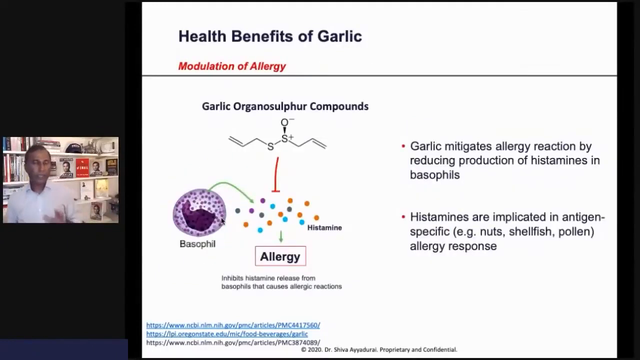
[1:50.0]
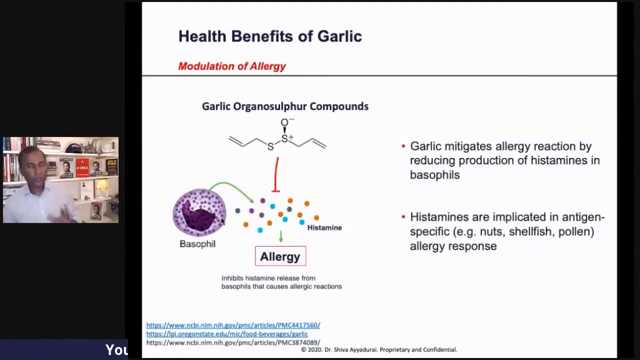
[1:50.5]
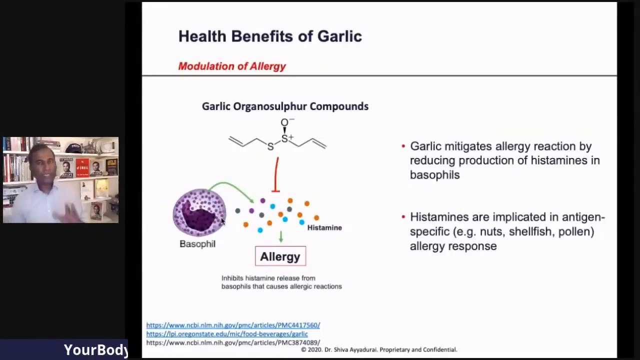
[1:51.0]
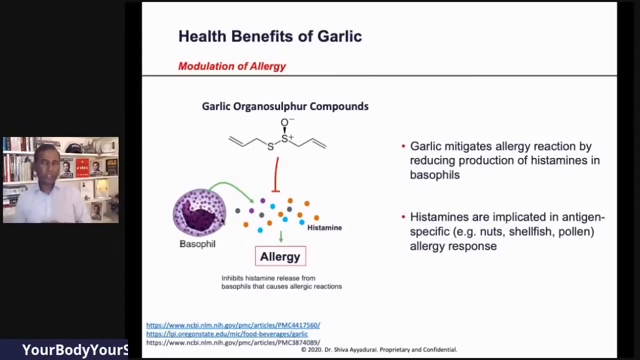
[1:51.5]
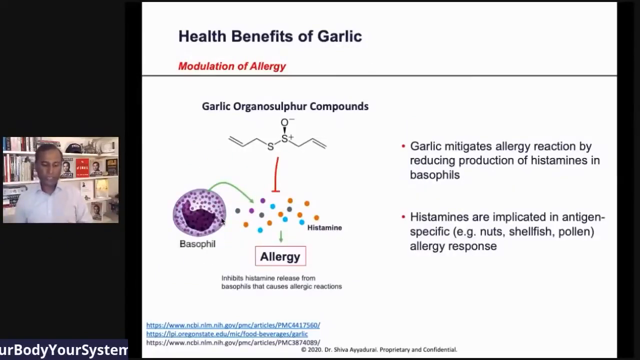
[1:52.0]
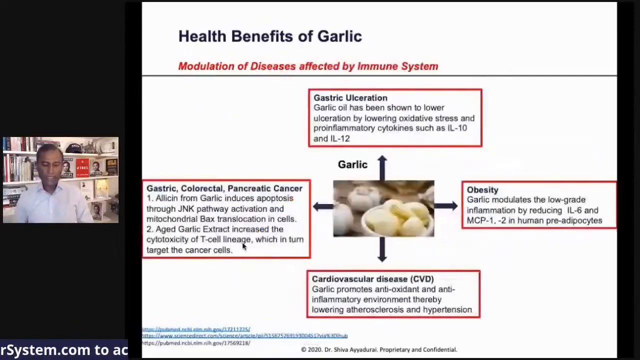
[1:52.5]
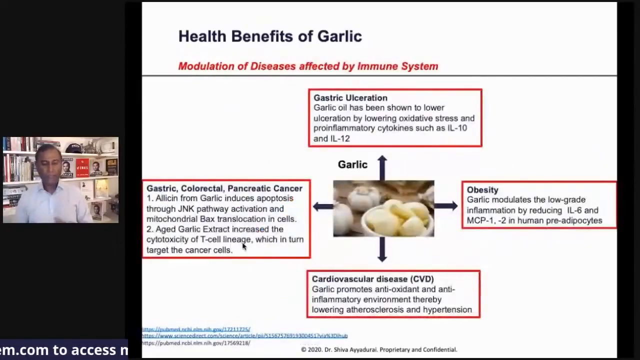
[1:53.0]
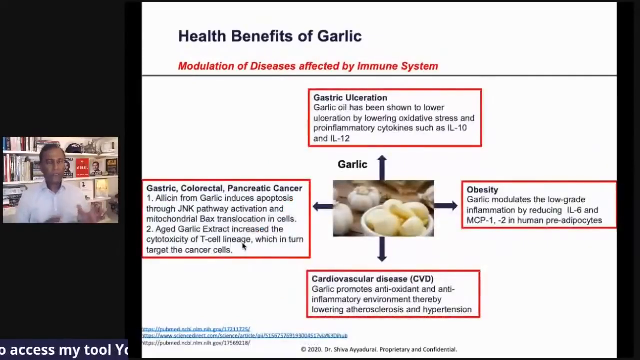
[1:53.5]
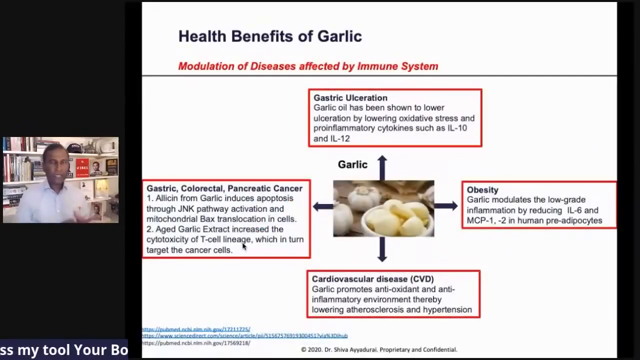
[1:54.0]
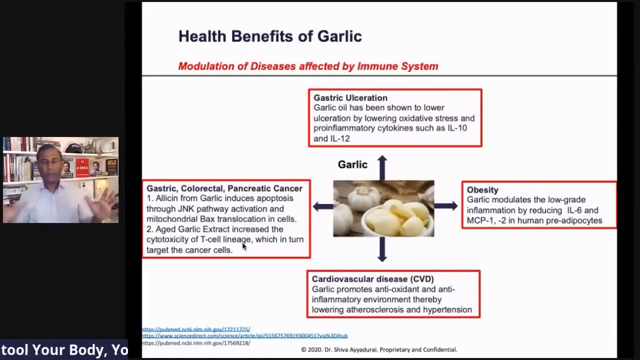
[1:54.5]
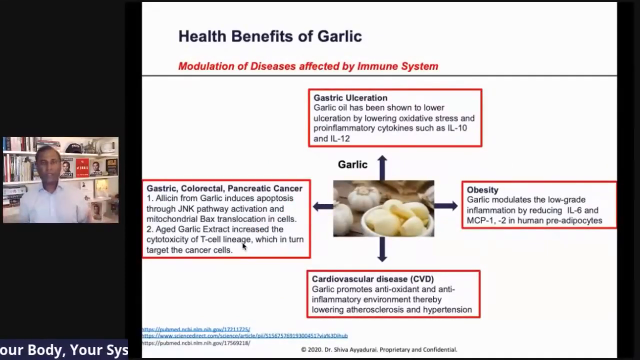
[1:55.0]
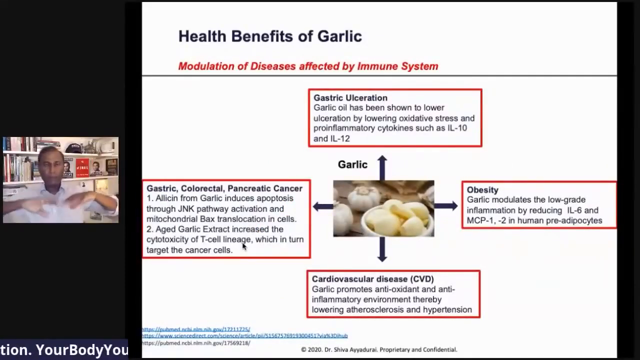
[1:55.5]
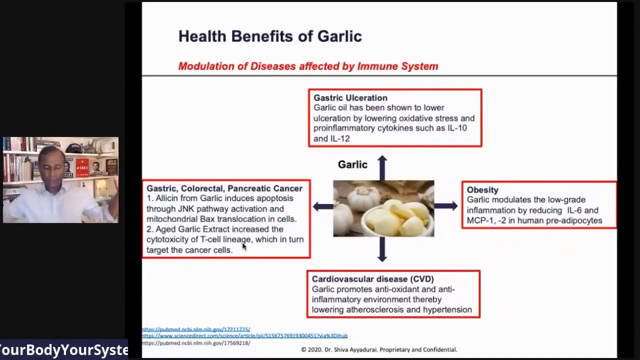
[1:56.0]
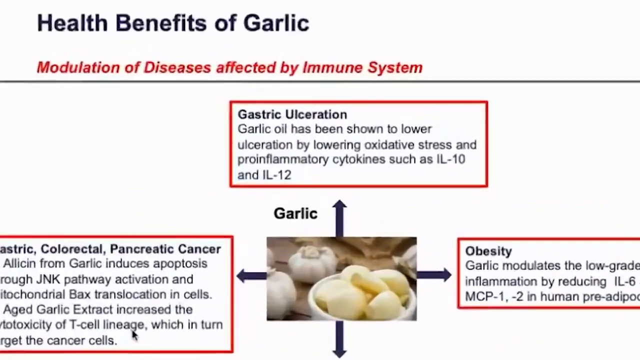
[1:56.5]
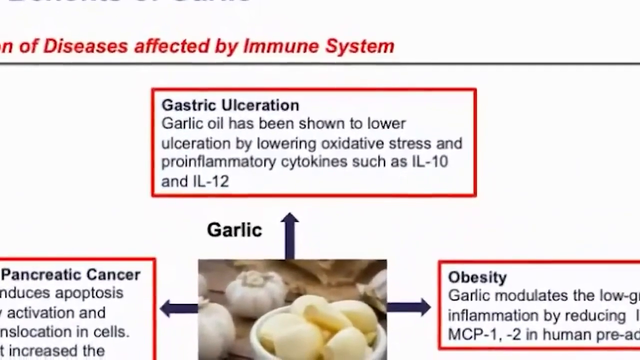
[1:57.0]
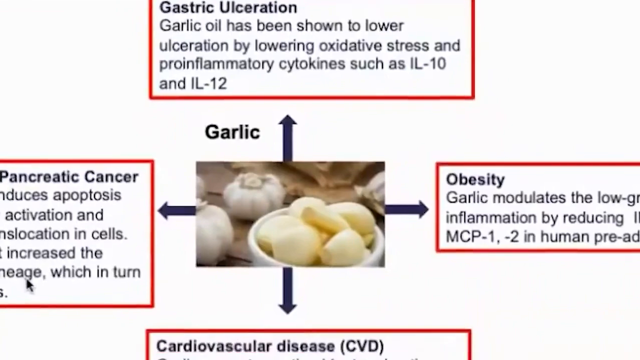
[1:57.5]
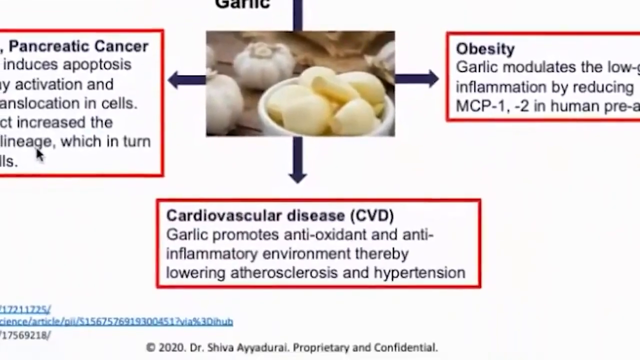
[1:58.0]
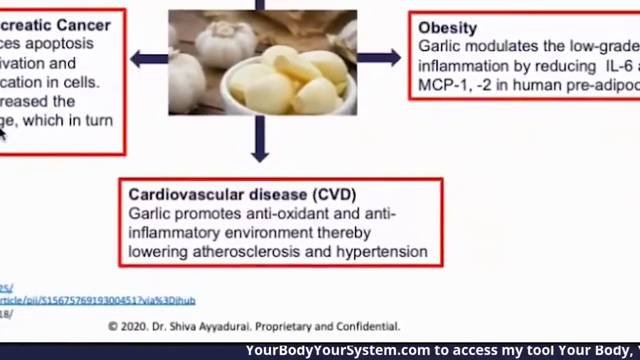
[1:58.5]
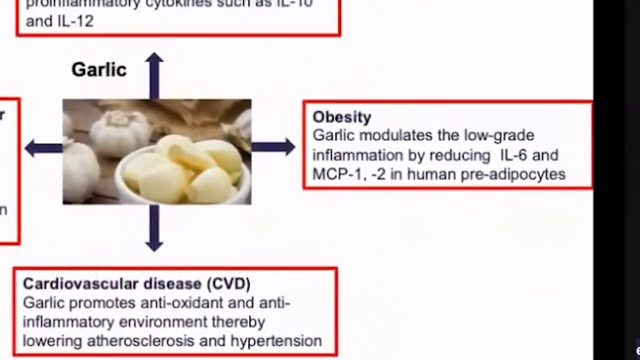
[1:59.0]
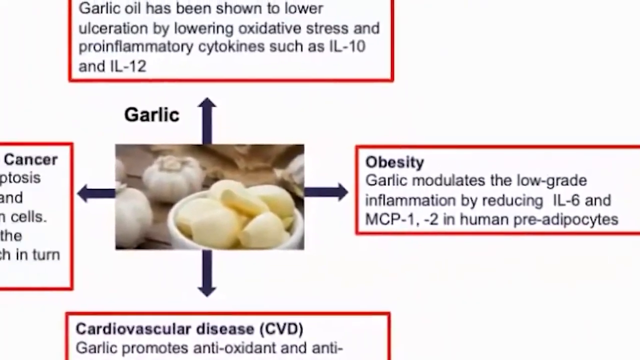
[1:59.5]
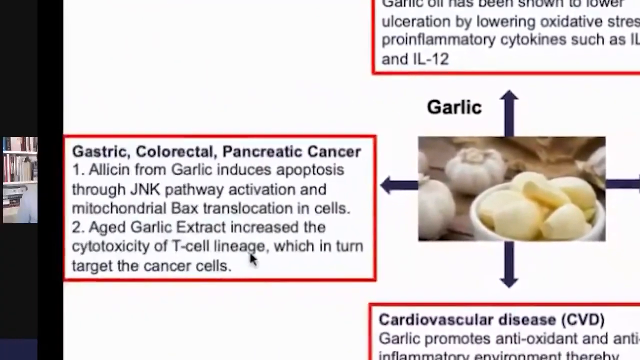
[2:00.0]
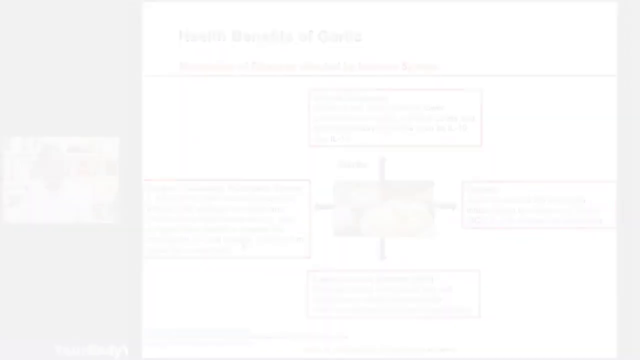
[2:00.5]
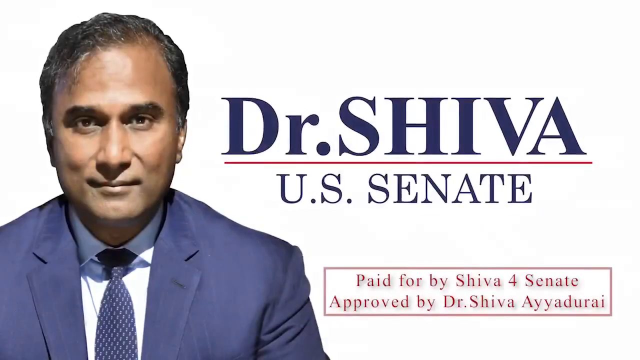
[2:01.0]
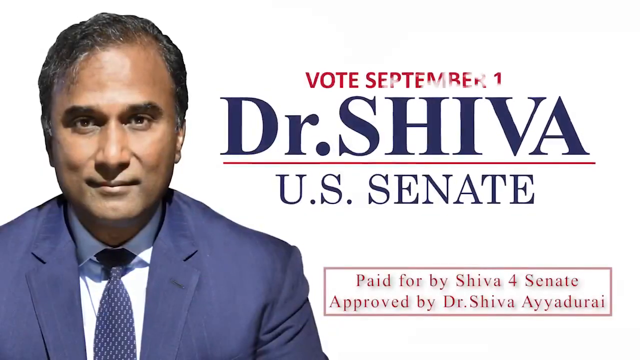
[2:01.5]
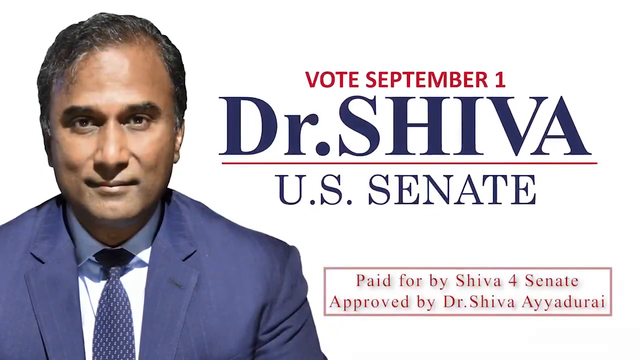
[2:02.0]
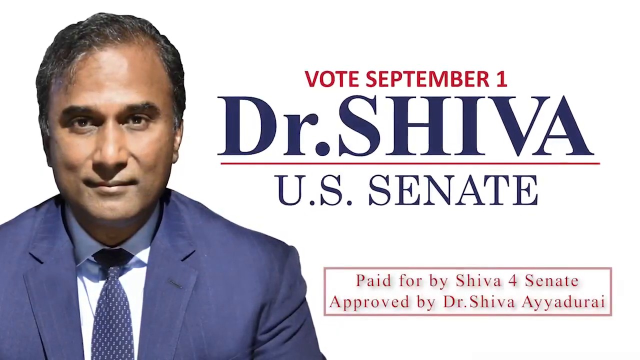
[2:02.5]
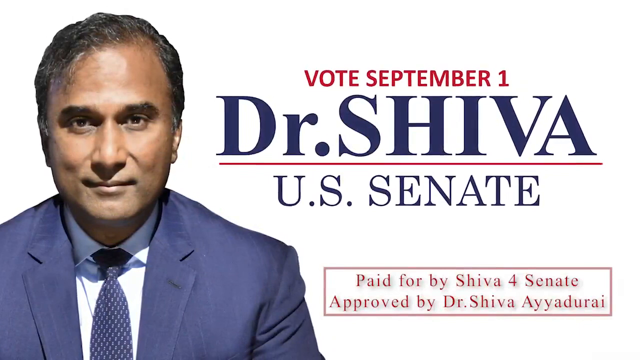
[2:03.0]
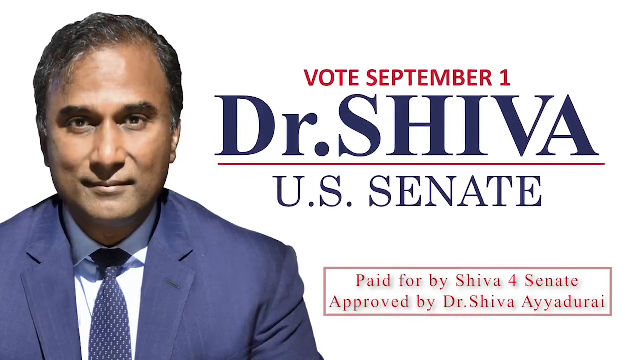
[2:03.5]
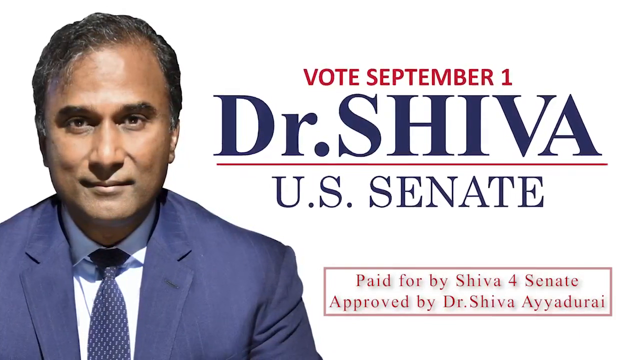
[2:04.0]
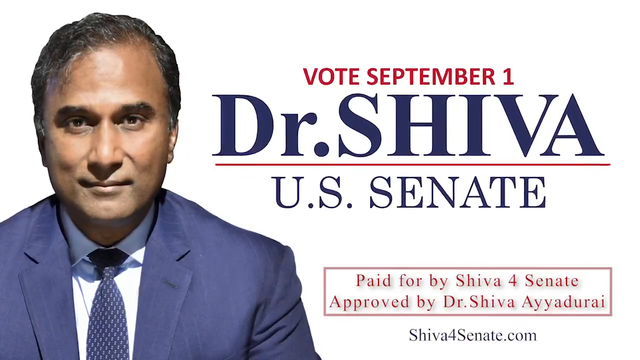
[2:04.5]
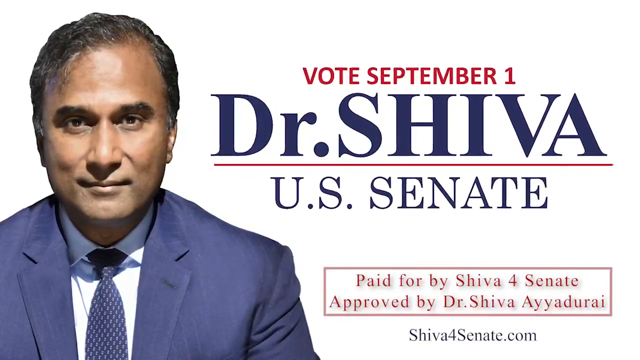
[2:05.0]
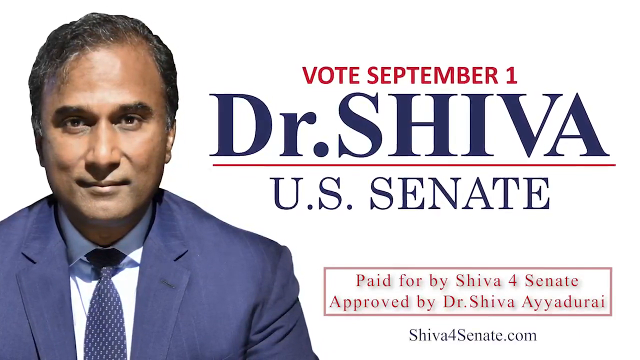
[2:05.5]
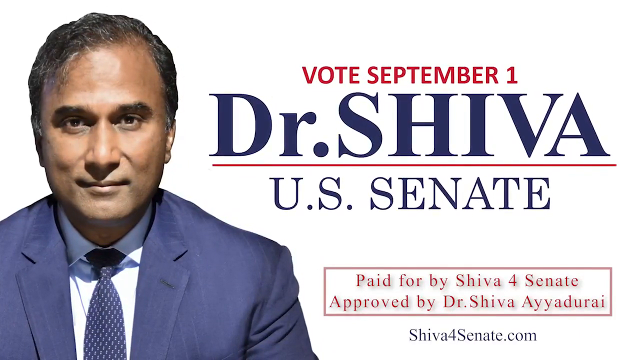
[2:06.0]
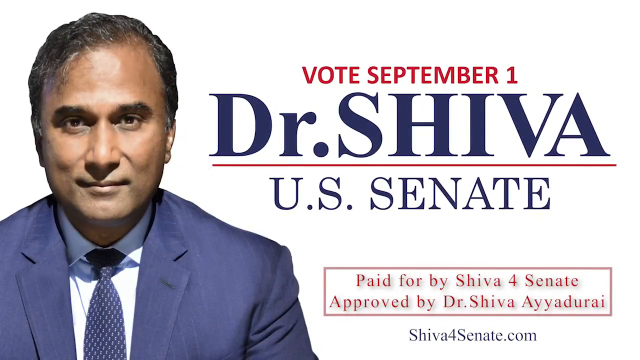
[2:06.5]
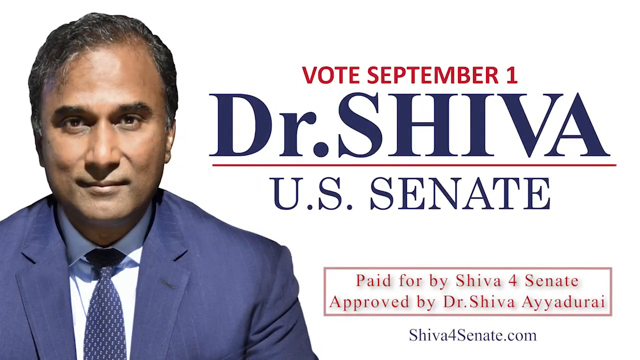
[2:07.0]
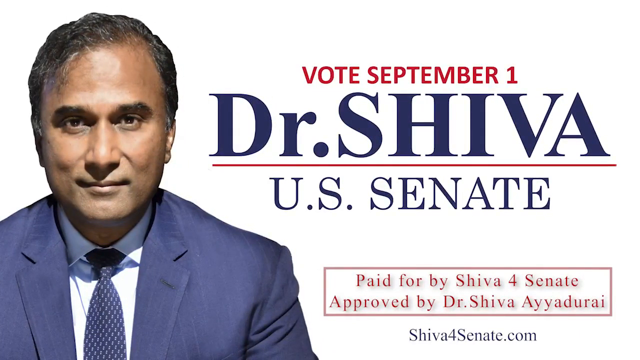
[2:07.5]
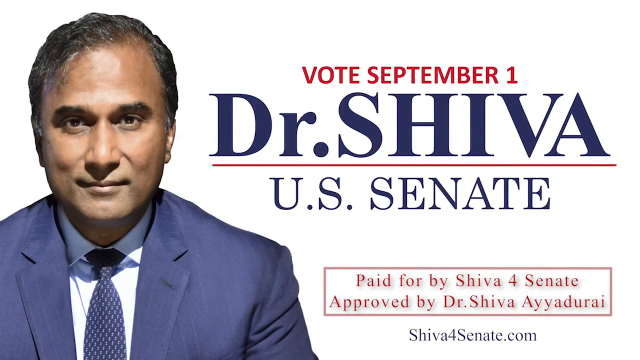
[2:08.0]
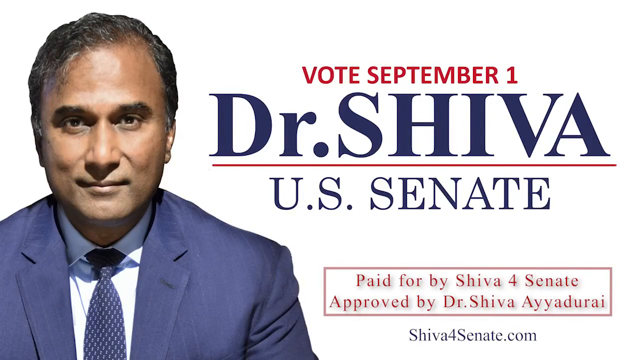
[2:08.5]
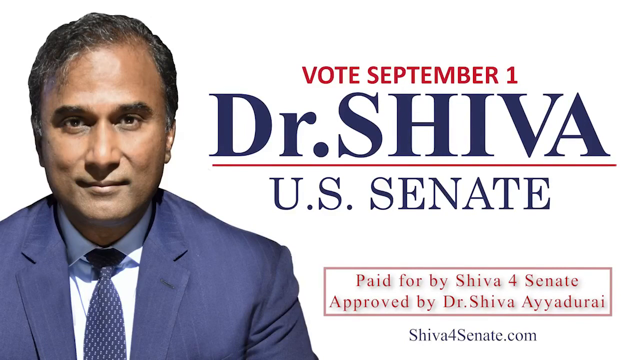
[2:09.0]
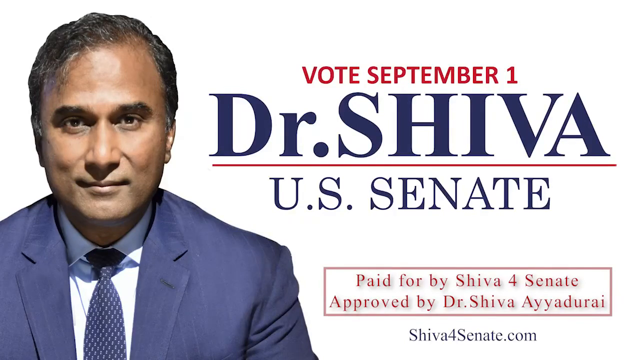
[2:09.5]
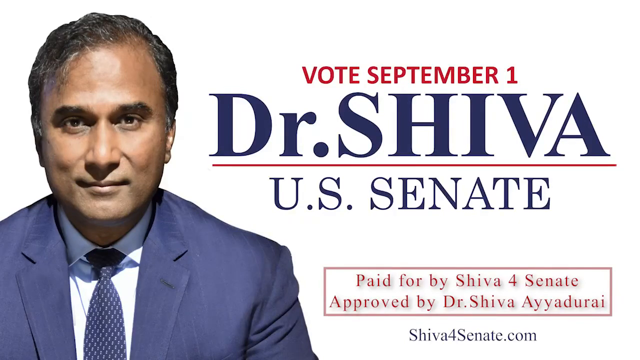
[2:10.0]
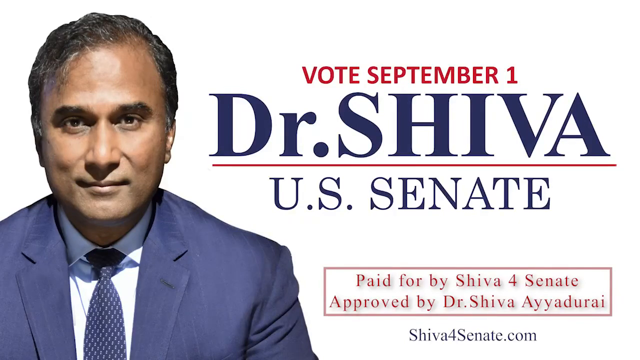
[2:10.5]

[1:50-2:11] A new PowerPoint page is titled "Health Benefits of Garlic" with the subtitle "Modulation of Allergy". Underneath is a graphic showing the interaction with the allergy, and on the right two points of text: "garlic mitigates allergy reaction by reducing production of histamines in basophils" and "histamines are implicated in antigen-specific (e.g. nuts, shellfish and pollen) allergy response". The next page is subtitled "Modulation of Diseases Affected by Immune System". In the very middle is the picture of the white bowl of garlic surrounded by other pieces of garlic, with small black text beside it reading "garlic". Four arrows come out of the image: one points upward to a section titled "gastric ulceration", one points left to a section titled "gastric, oral, or rectal pancreatic cancer", one points right to a section called "obesity", and one points down to a section titled "cardiovascular disease". All four sections are highlighted by a red border. The video briefly zooms in on all four sections of the graphic. It then changes to an image with a solid white background. On the left is a cutout of the bust of Dr. Shiva facing the front; he is dark-skinned with short hair and wears a dark blue suit. On the right, large blue text reads "Dr. Shiva", with "U.S. Senate" underneath. In the bottom right corner, inside a red border, text reads "paid for by Shiva for Senate, approved by Dr. Shiva Ayyadurai". The "Dr. Shiva US Senate" title slowly grows larger while the text "vote september 1" appears in red right above it.